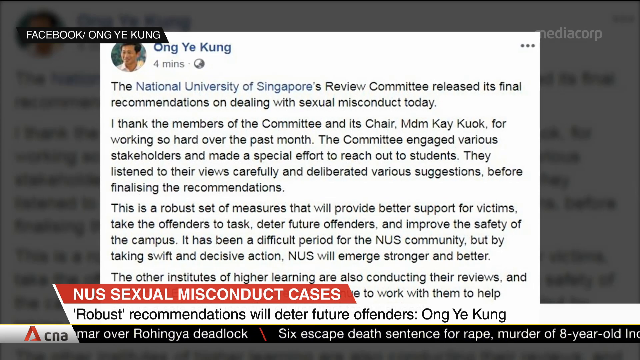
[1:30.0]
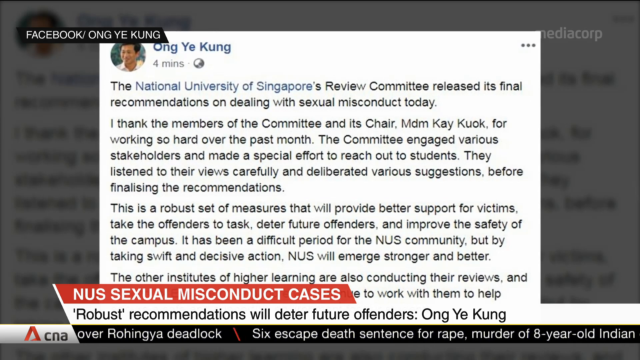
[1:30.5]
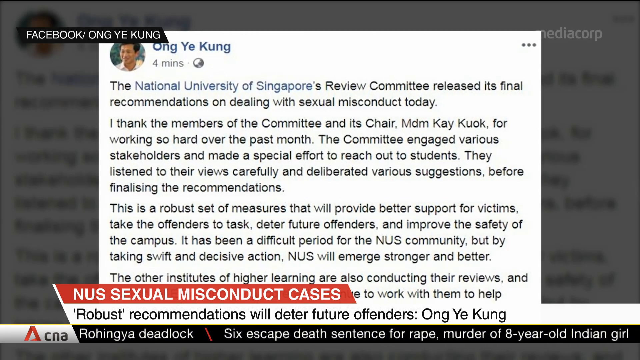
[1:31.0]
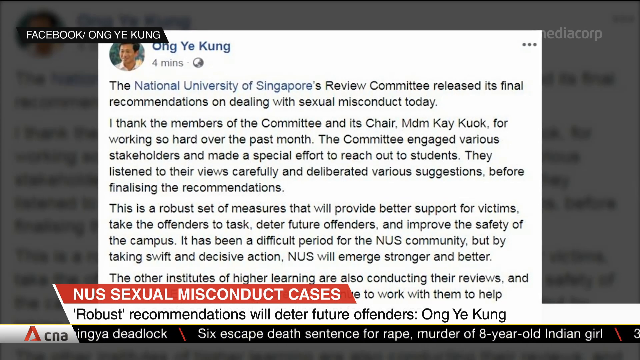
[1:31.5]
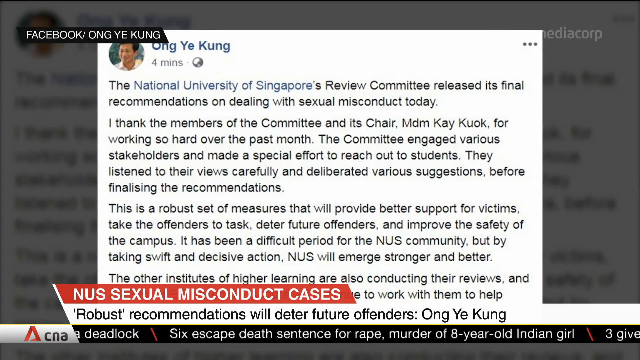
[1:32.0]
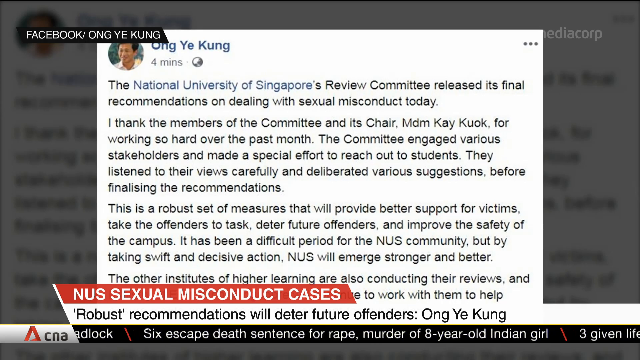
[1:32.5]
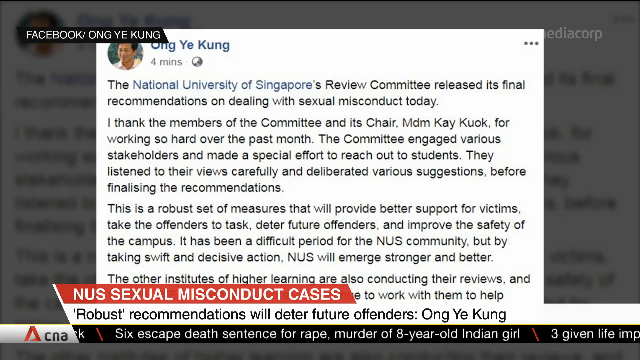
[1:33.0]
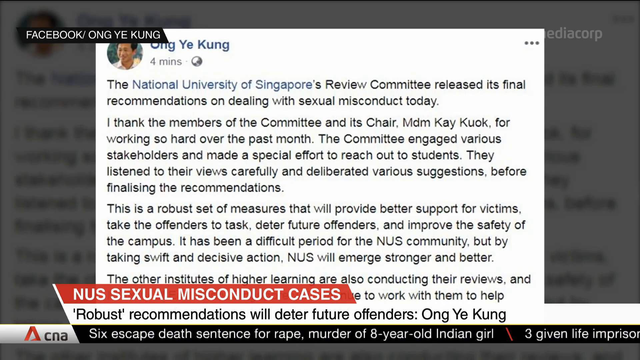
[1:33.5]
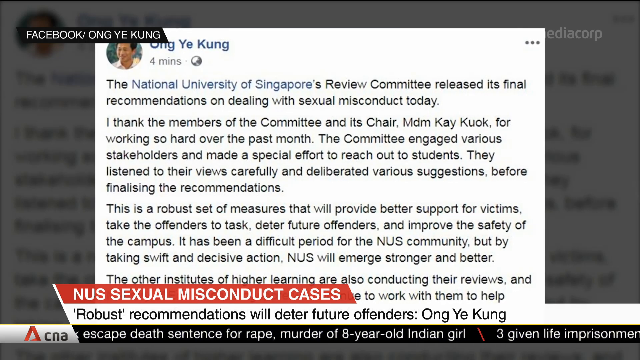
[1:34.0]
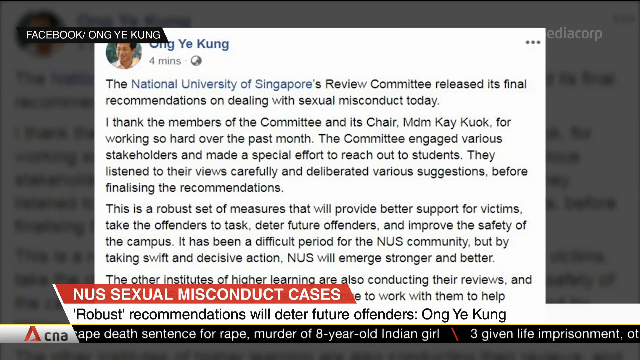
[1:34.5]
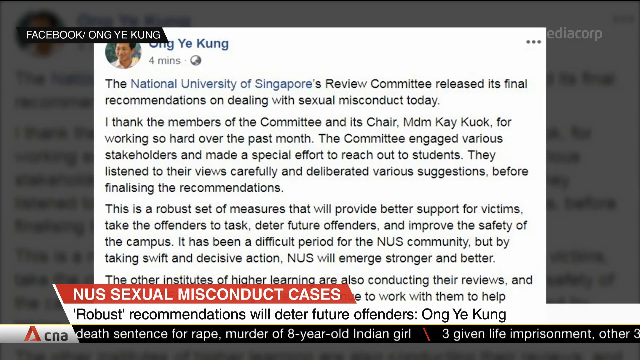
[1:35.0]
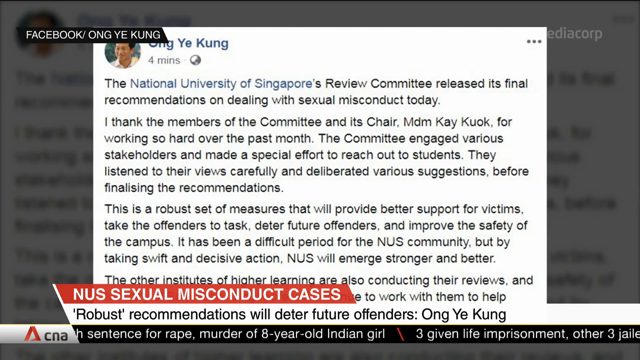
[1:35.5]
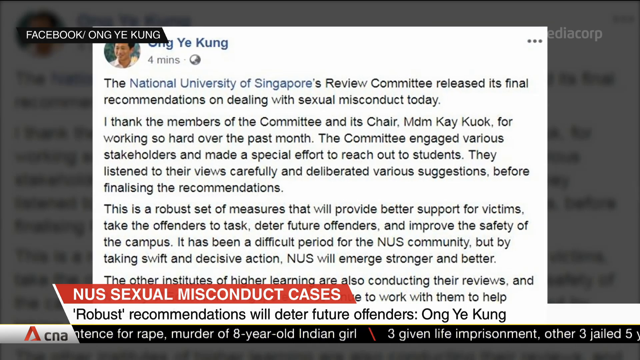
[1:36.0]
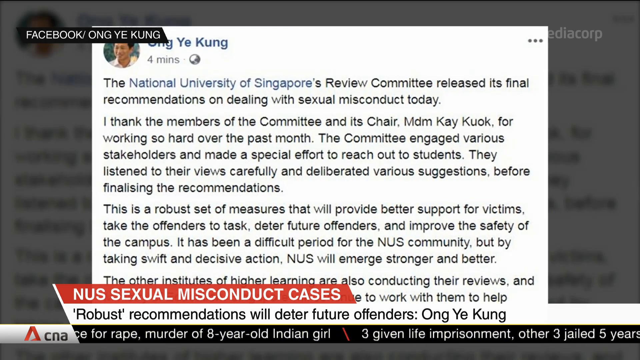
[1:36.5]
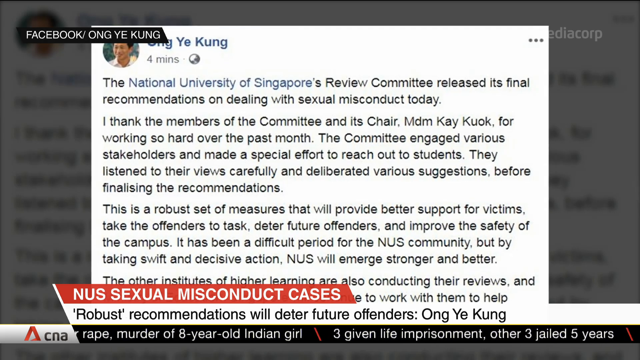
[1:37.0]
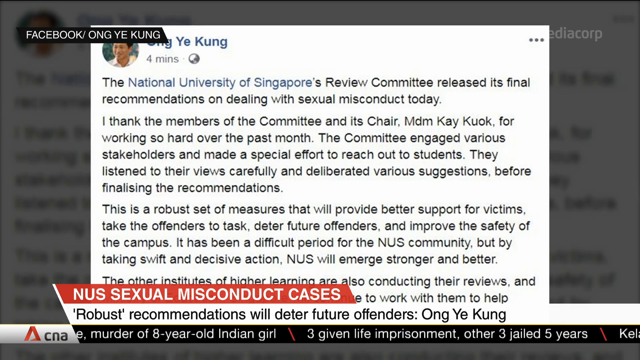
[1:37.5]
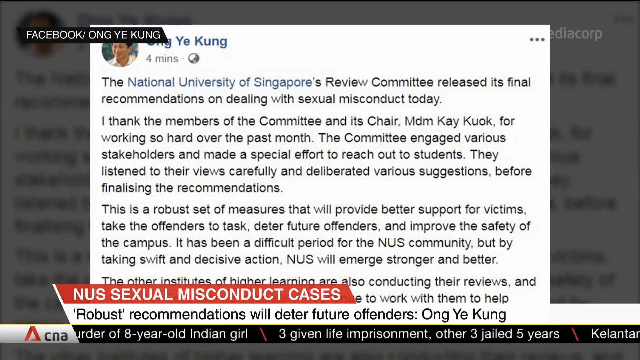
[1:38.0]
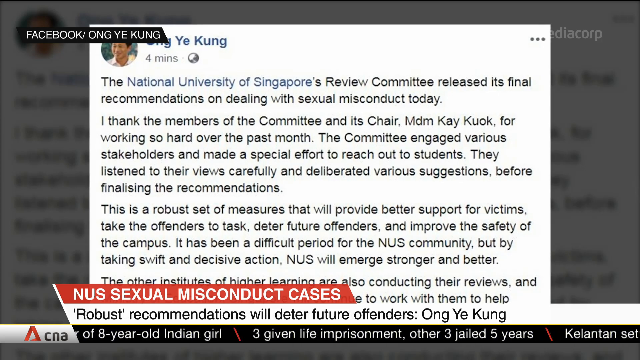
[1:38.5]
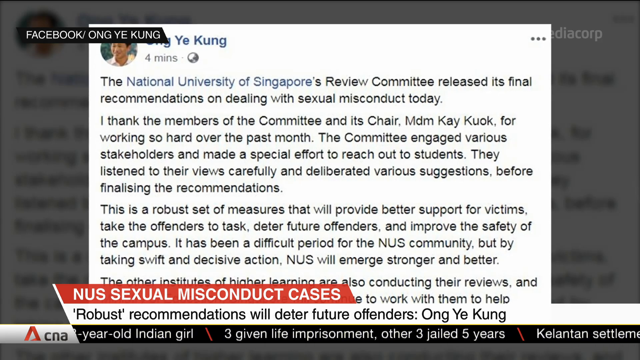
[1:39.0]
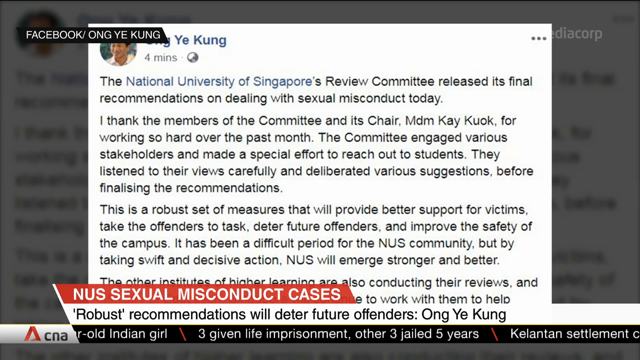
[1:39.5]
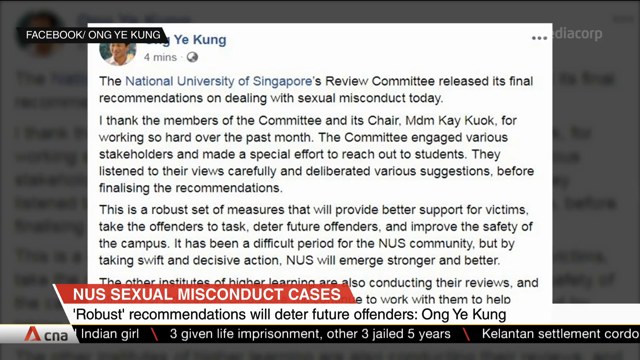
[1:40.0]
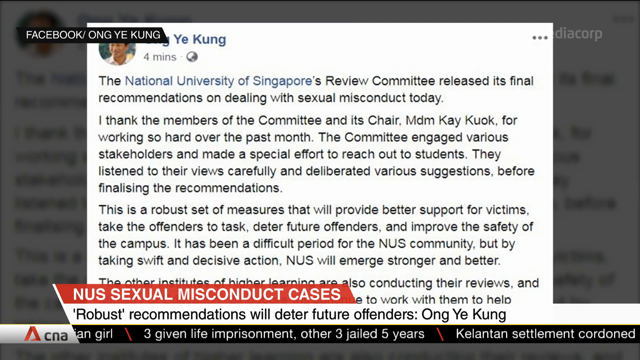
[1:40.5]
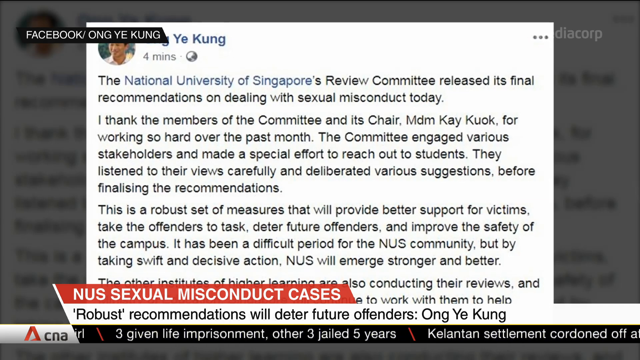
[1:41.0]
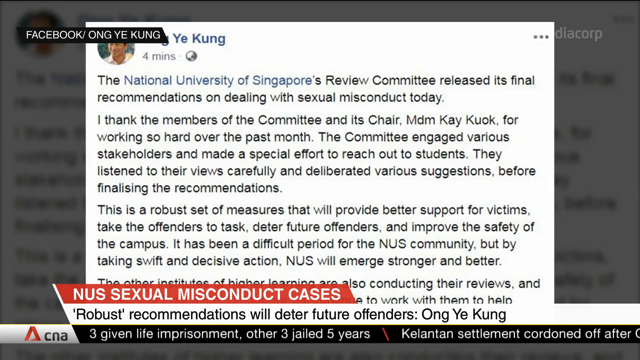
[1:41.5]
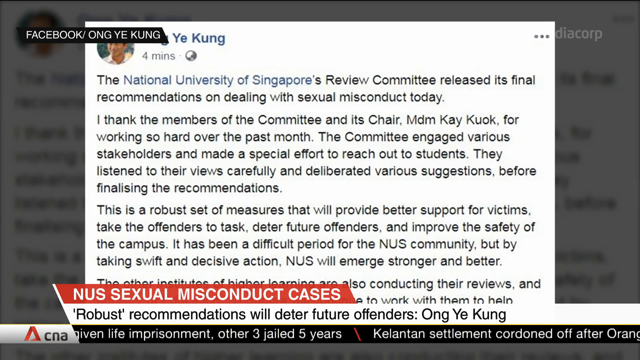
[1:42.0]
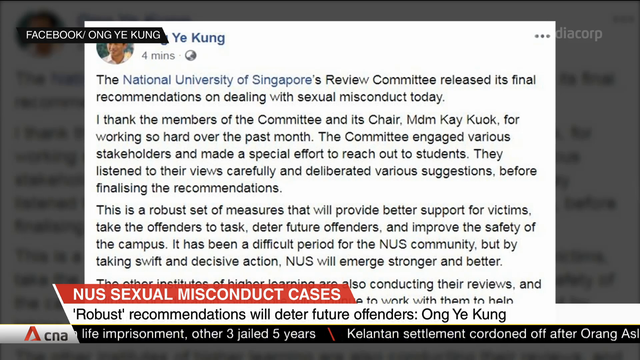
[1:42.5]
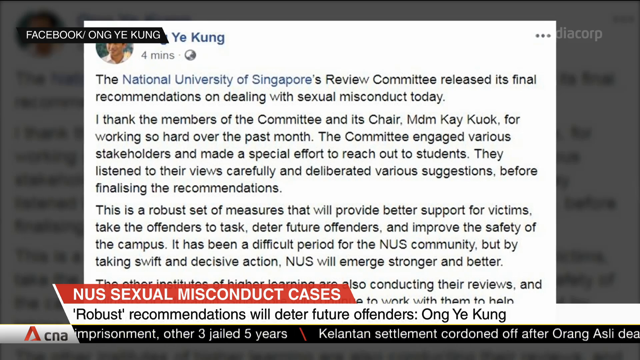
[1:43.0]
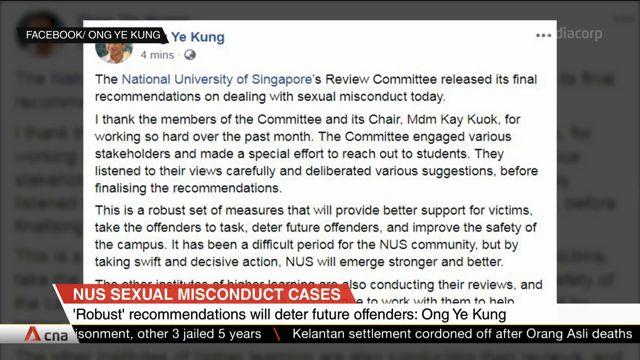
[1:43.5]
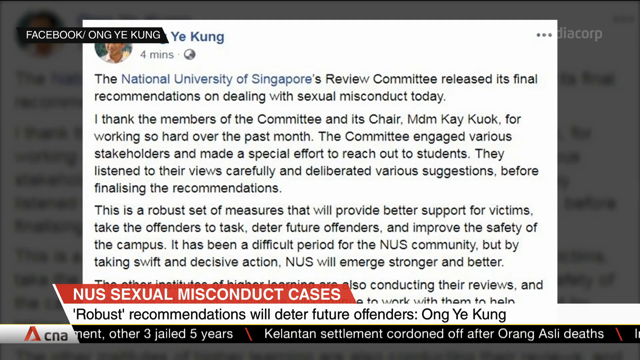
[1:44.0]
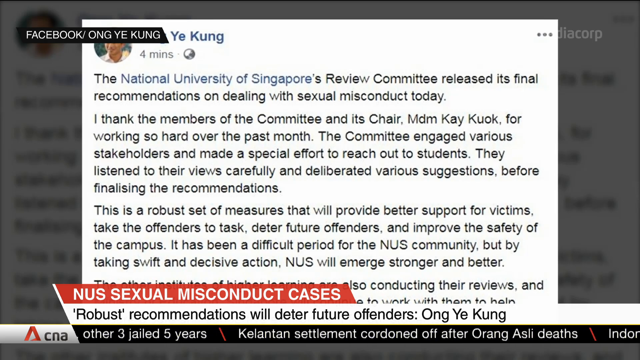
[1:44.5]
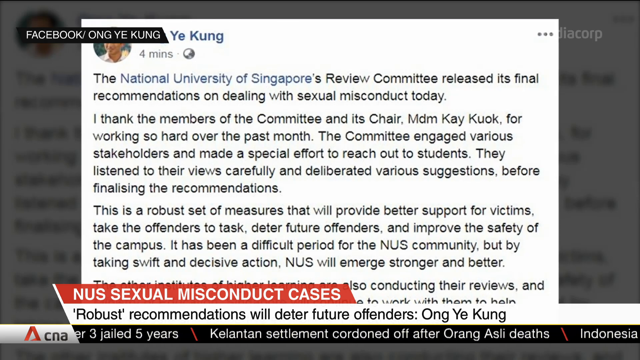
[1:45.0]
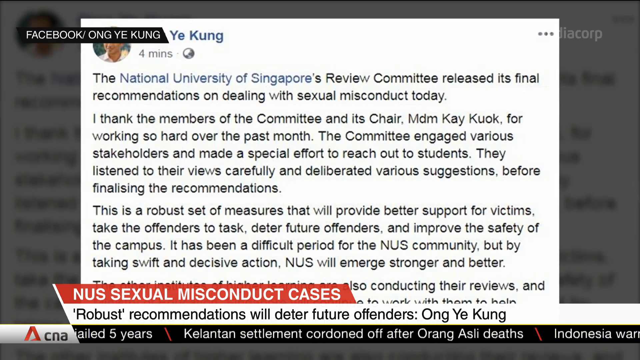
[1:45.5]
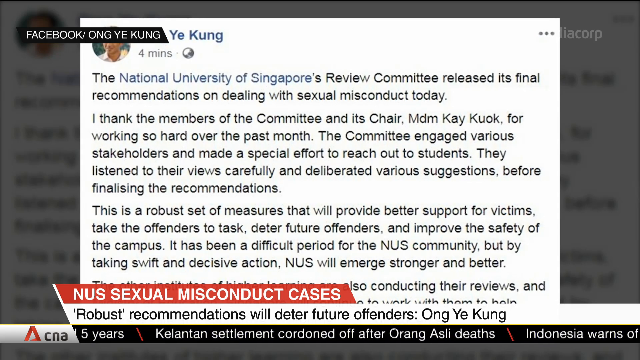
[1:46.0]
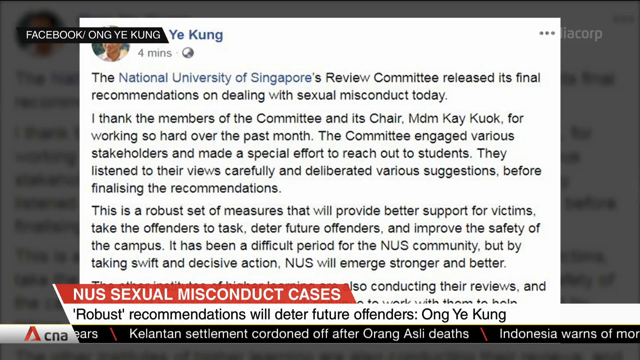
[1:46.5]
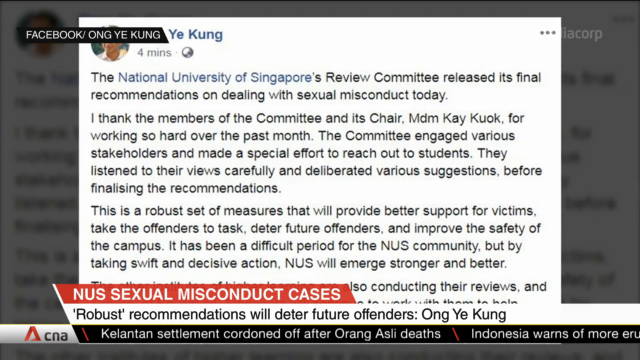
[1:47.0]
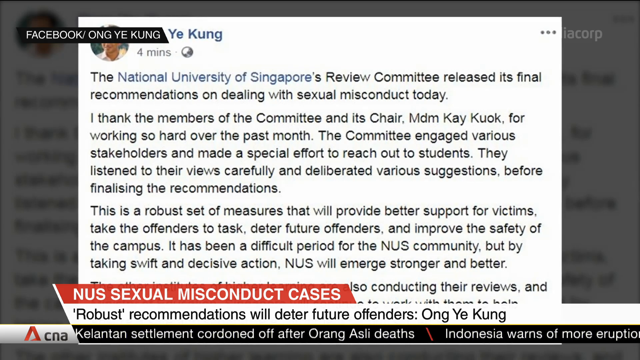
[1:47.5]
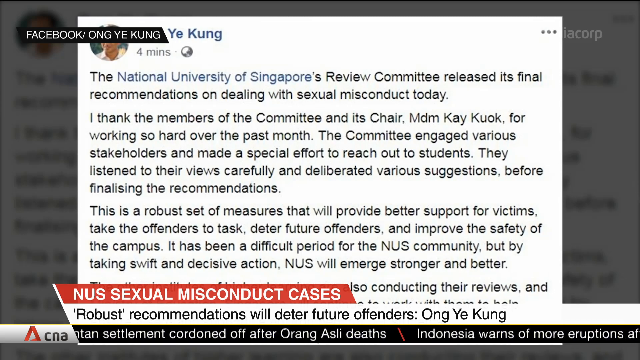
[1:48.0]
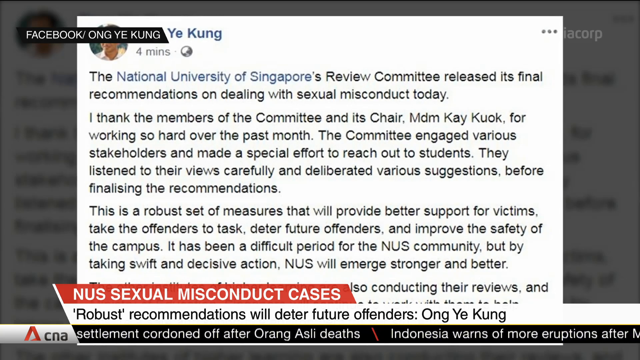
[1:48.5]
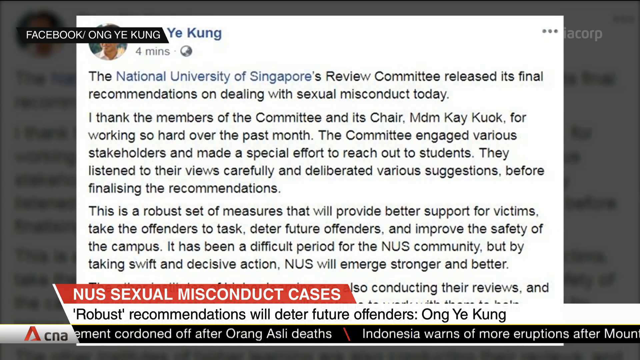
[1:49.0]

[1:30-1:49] Text that seems to be a Facebook post by Ong Ye Kung, written about four minutes ago, is shown, with a picture of Ong Ye Kung at the far left. The post reads: "the National University Committee released its final recommendations dealing with sexual misconduct today. I thank the members of the committee and its chair" and continues "for working so hard over the past month. The committee engaged various stakeholders and made a special effort to reach out to students. They listened to their views carefully and deliberated various suggestions before finalizing the recommendations. This is a robust set of measures that will provide better support for victims, take the offenders to task, deter future offenders and improves the safety of the campus. It has been a difficult period for the NUS community, but by taking swift and decisive action, NUS will emerge stronger and better. Together, Institutes of Higher Learning are also conducting their reviews."